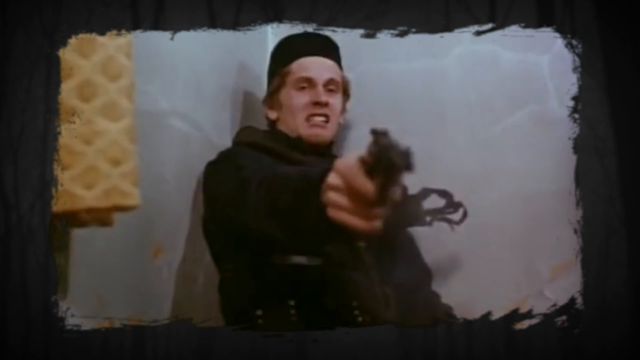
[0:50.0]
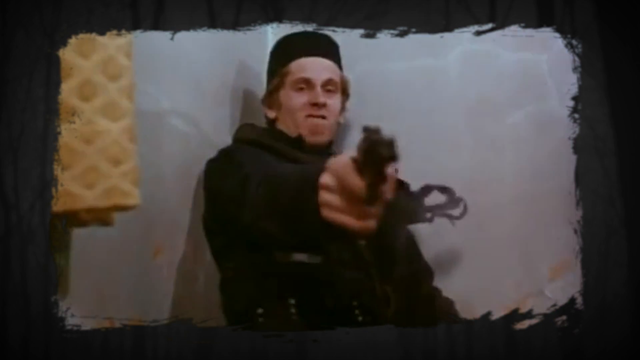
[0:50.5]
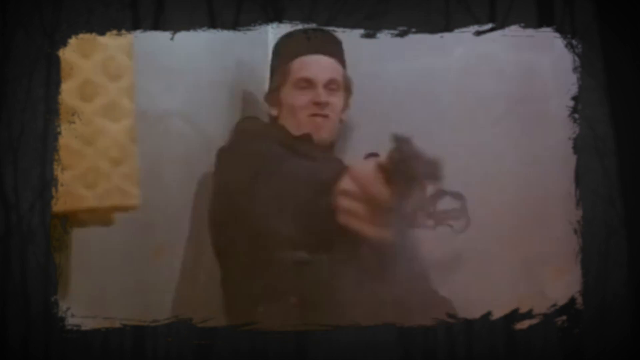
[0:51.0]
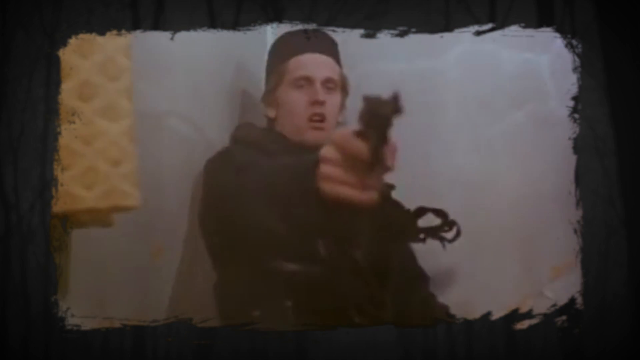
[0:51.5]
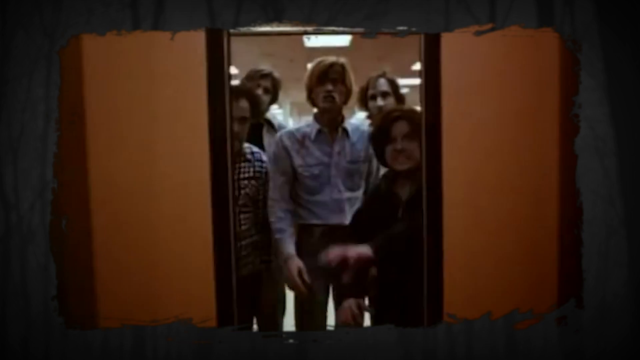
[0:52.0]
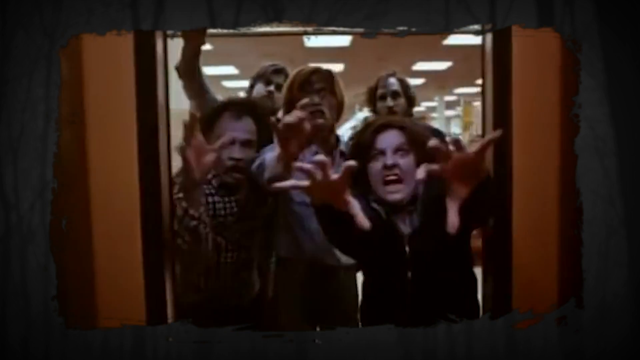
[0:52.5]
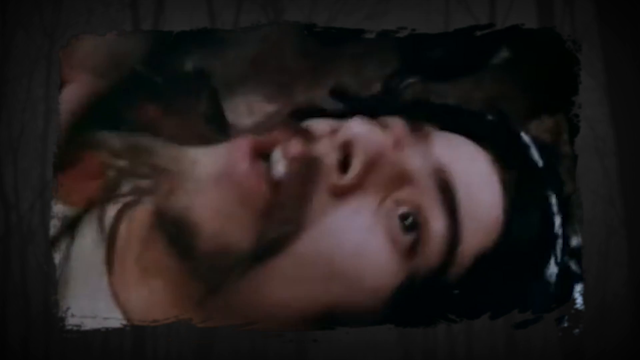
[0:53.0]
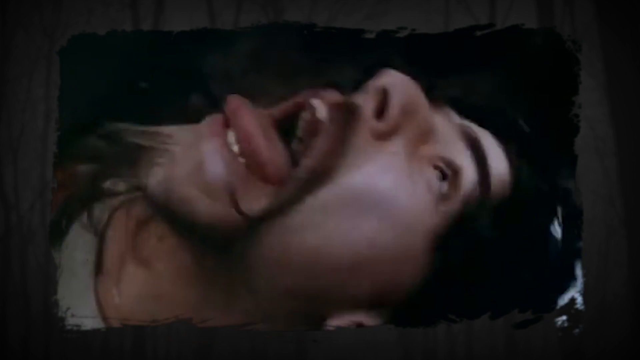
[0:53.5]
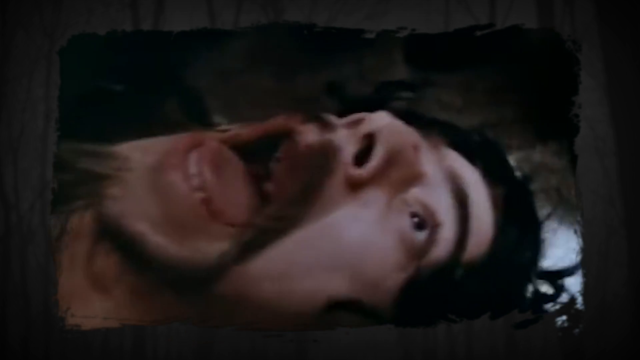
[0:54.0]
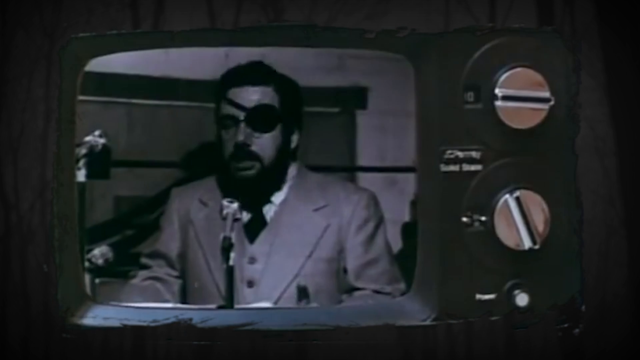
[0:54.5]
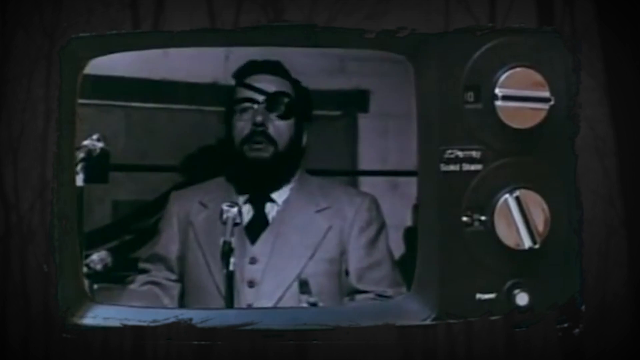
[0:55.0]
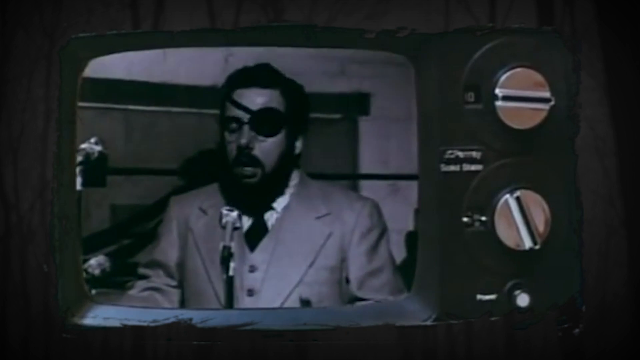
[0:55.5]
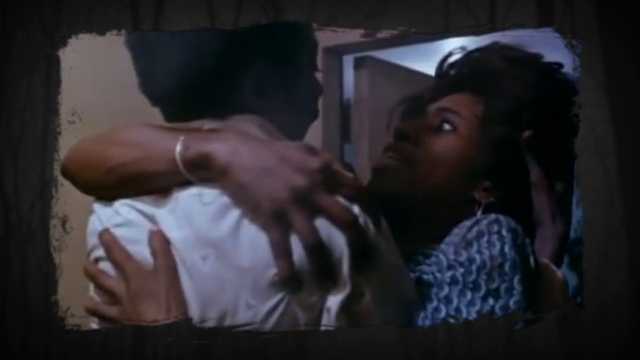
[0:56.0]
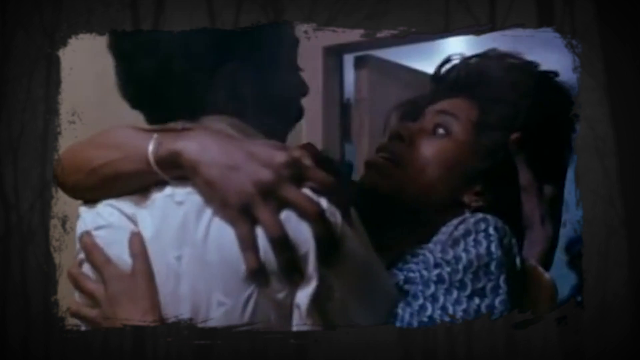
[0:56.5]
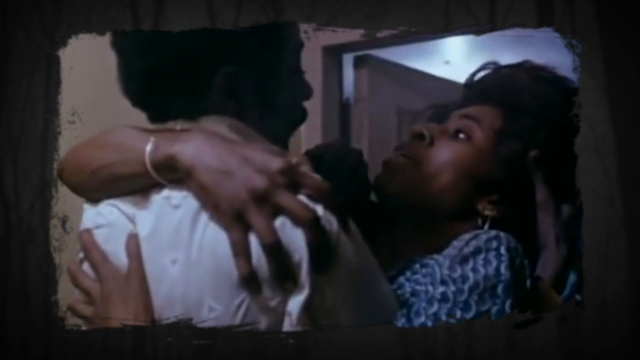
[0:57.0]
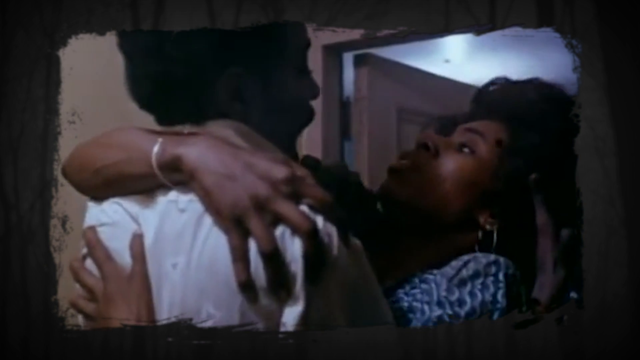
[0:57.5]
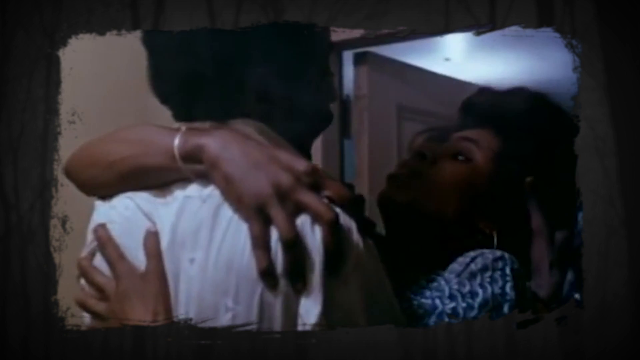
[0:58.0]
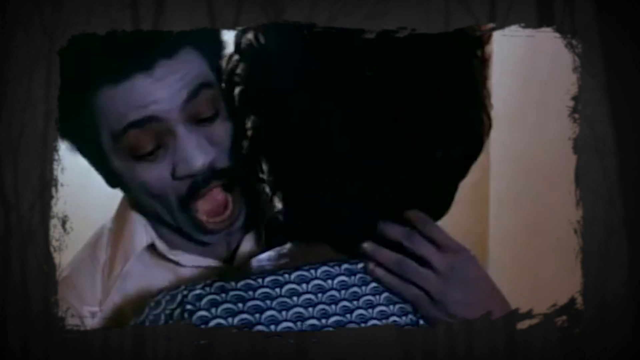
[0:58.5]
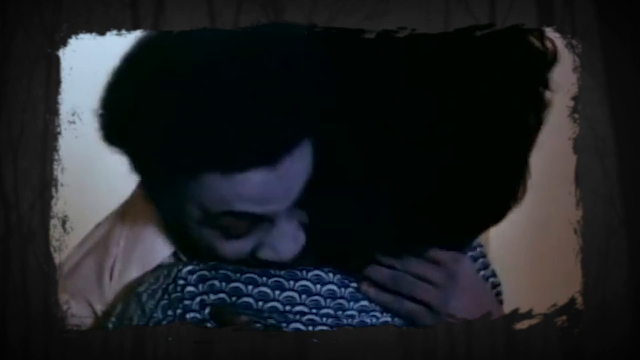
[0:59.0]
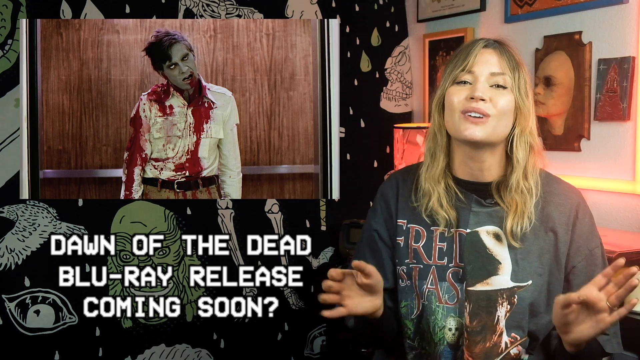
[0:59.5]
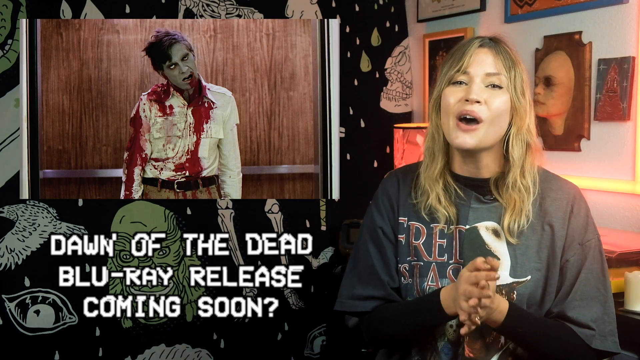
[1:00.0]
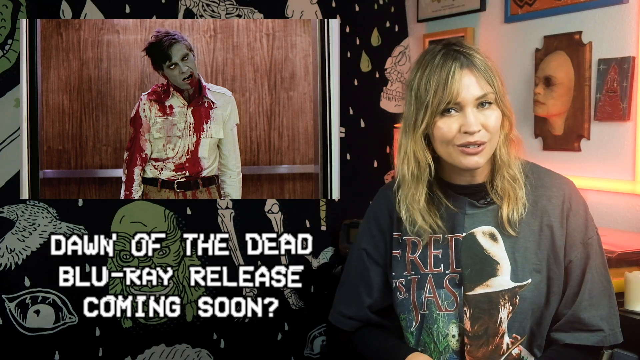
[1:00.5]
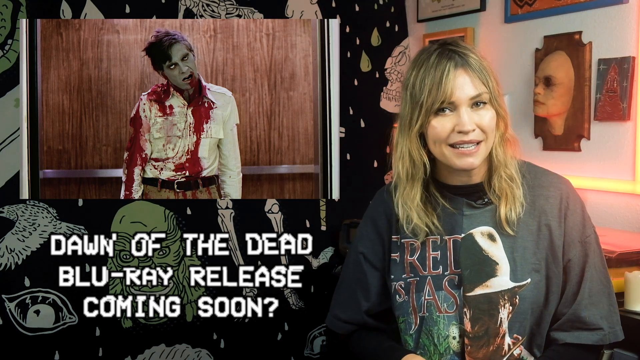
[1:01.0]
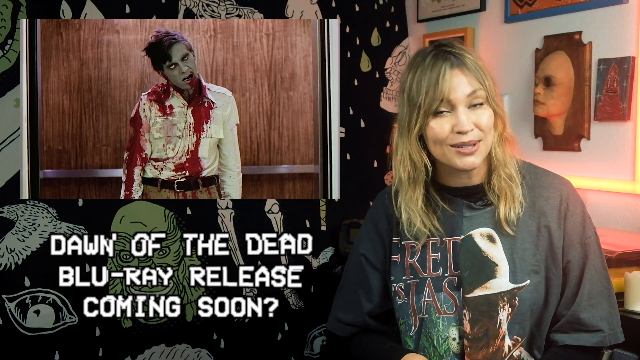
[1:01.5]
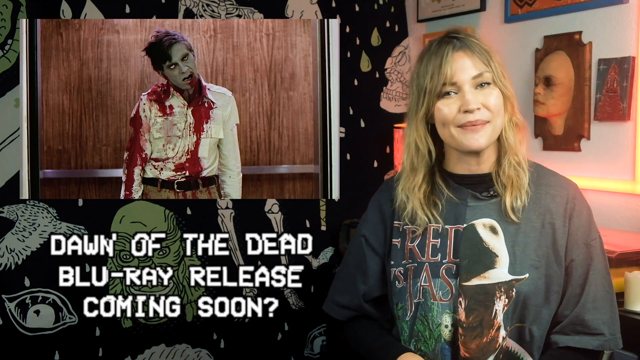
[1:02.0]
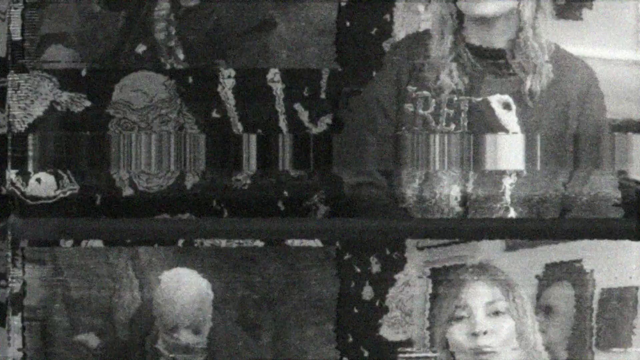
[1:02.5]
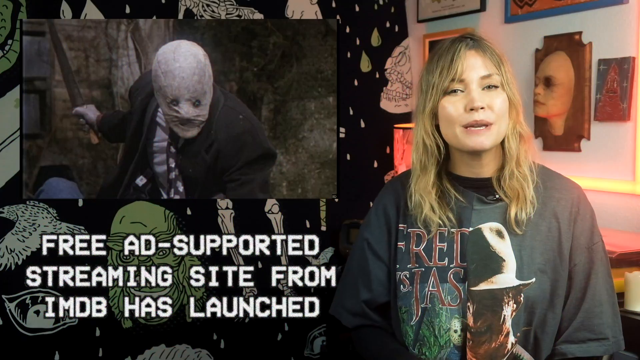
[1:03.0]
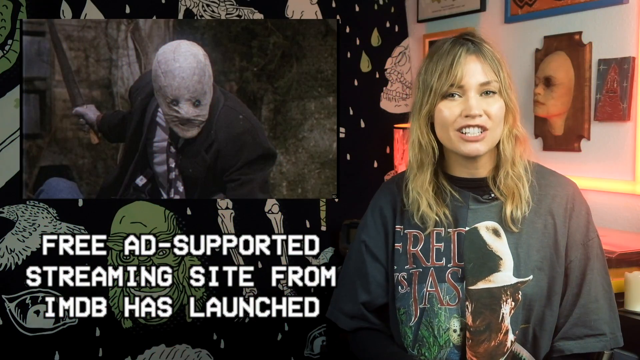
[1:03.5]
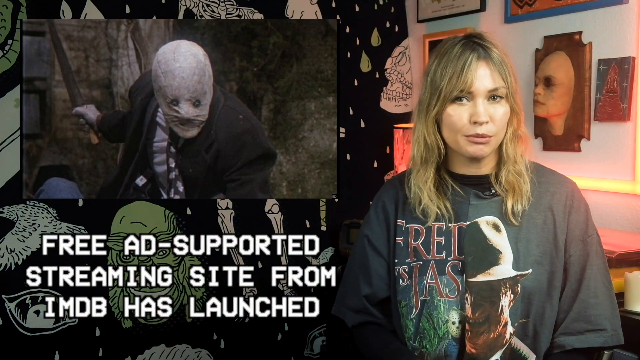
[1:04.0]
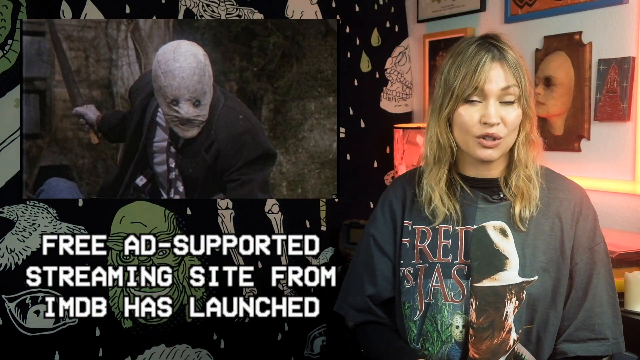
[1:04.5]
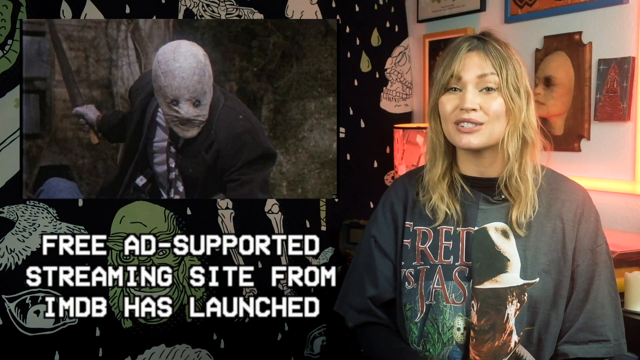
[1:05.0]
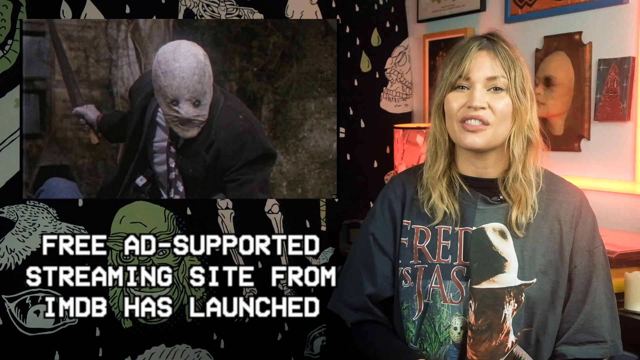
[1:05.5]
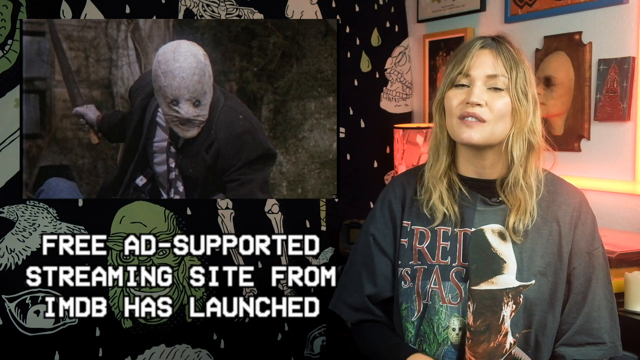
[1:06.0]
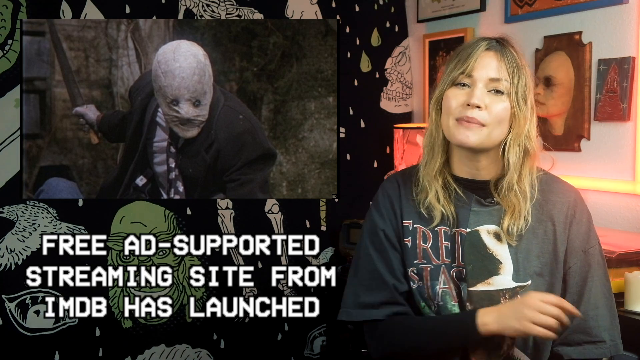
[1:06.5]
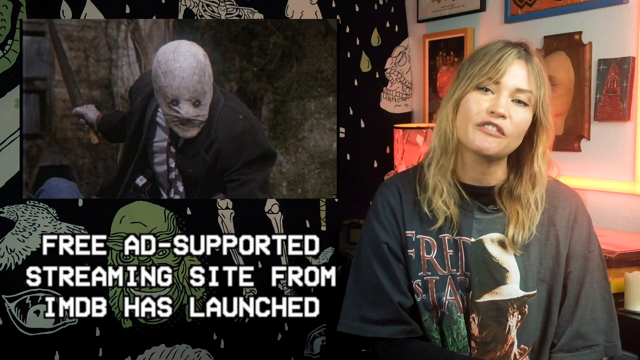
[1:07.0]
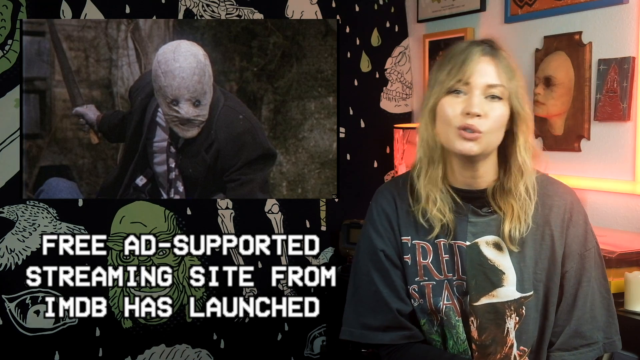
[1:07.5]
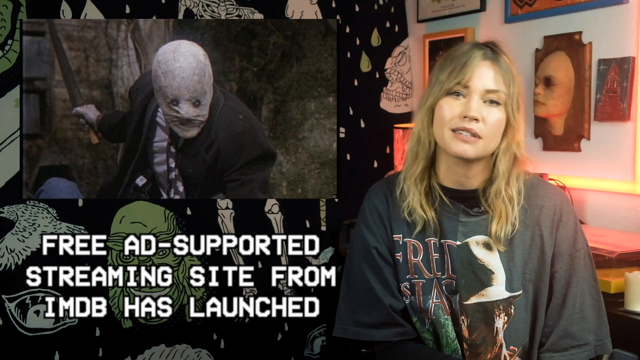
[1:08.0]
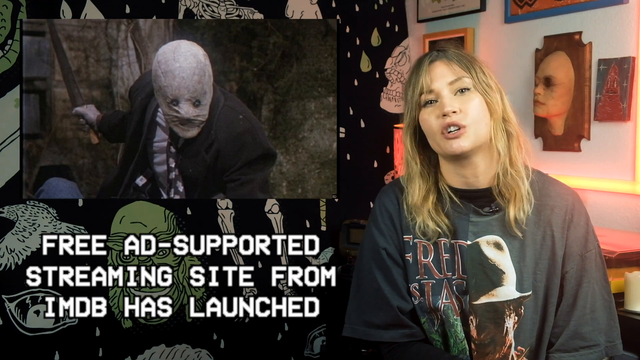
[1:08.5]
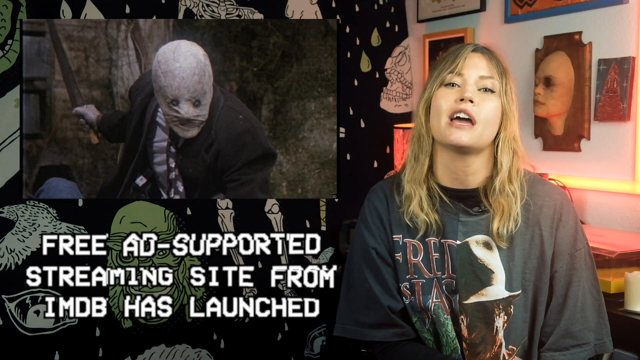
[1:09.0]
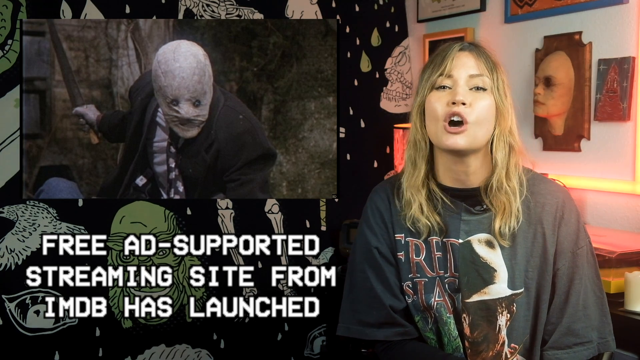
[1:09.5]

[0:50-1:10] A scene from another movie shows a guy shooting dozens of zombies and another person lying on the floor screaming. Another movie, which looks old or classic, shows a black woman being bitten on the neck by a zombie with a very pale face. Whitney then appears again and speaks. An image from another movie scene shows a man in a suit wearing a scary-looking mask and holding a big knife in his hand.